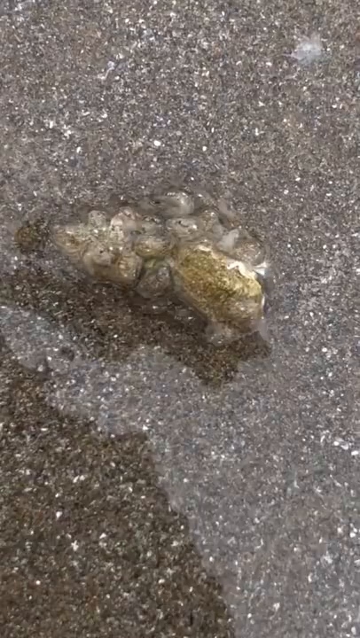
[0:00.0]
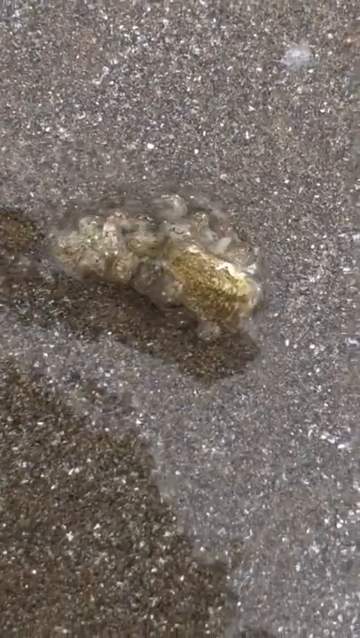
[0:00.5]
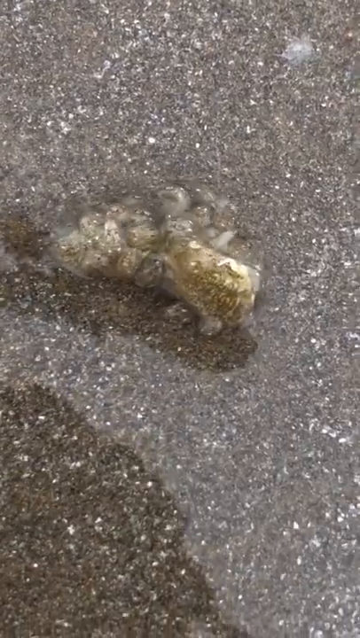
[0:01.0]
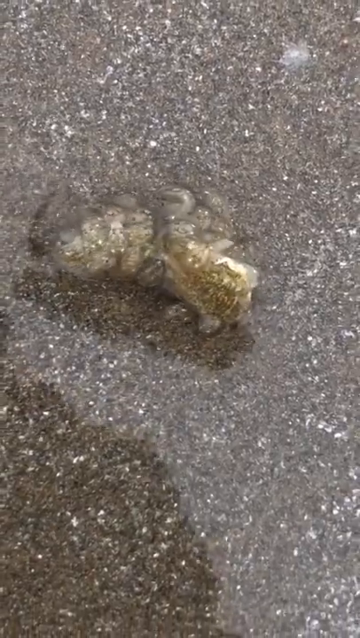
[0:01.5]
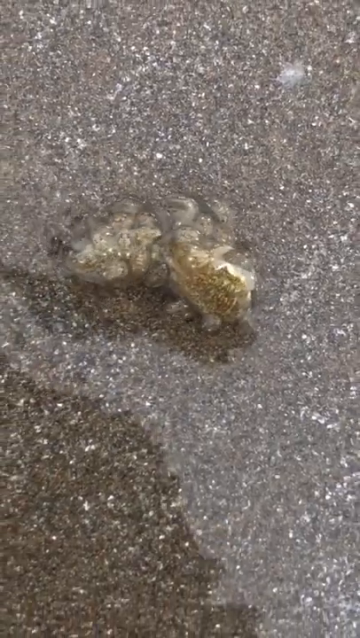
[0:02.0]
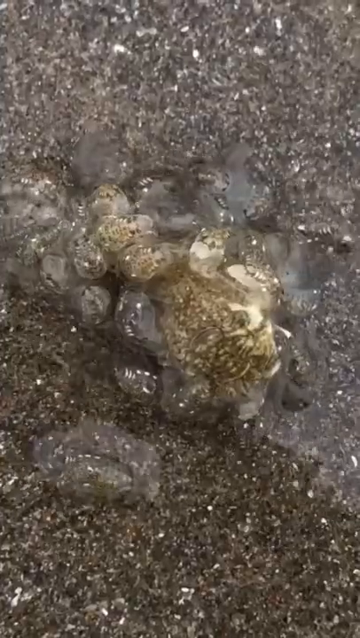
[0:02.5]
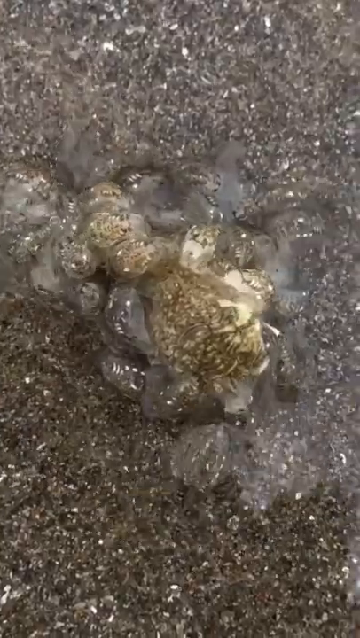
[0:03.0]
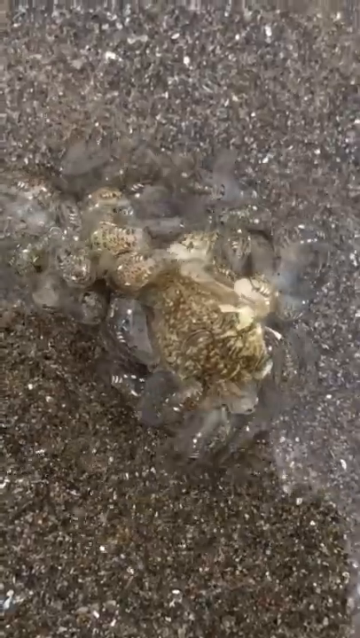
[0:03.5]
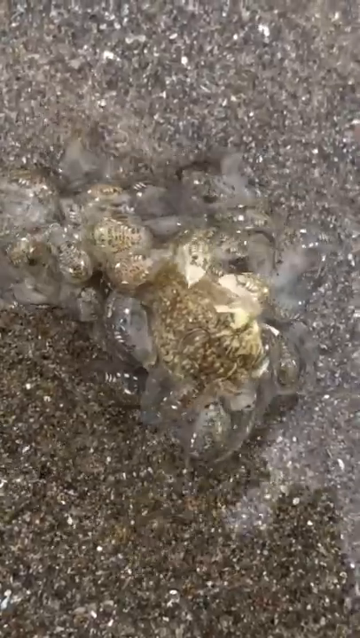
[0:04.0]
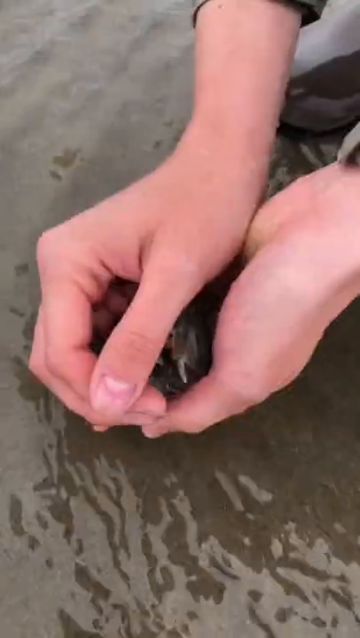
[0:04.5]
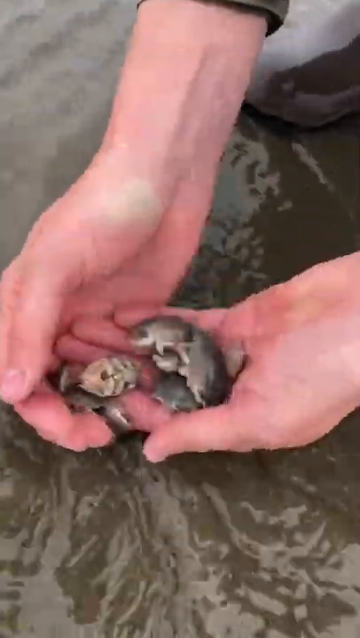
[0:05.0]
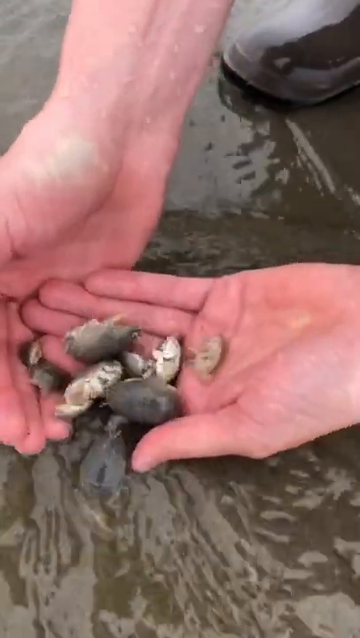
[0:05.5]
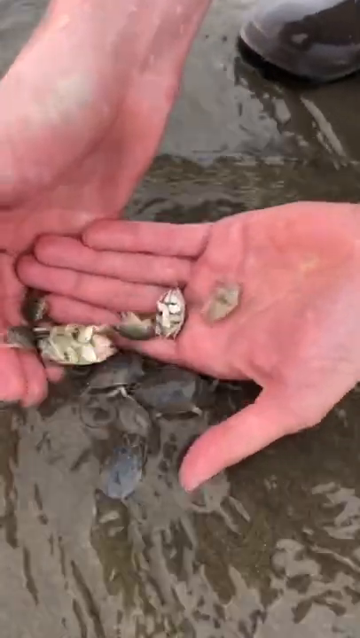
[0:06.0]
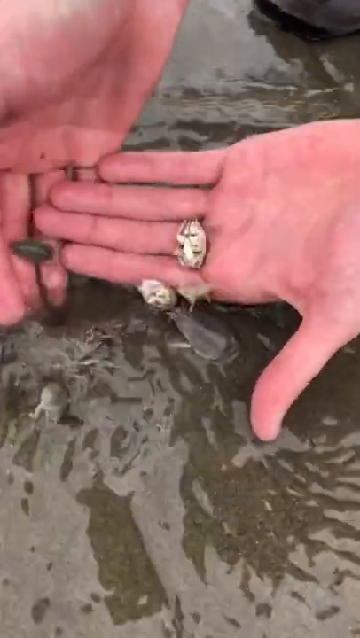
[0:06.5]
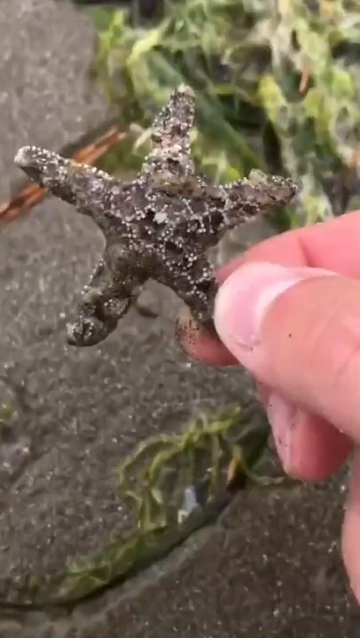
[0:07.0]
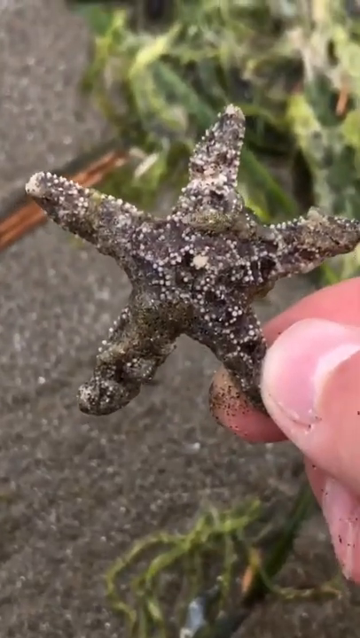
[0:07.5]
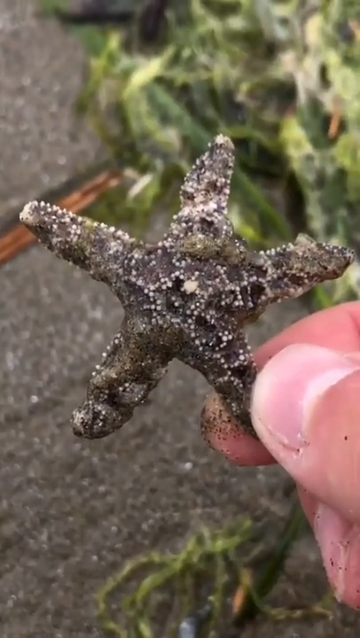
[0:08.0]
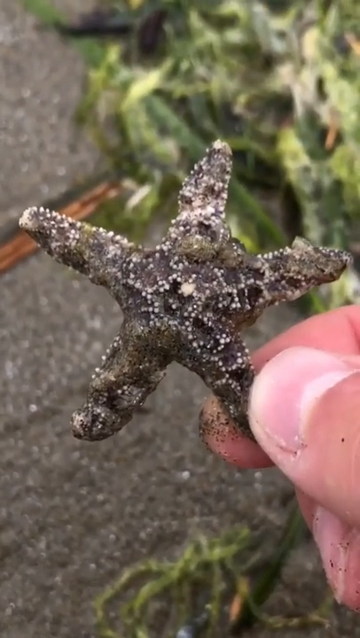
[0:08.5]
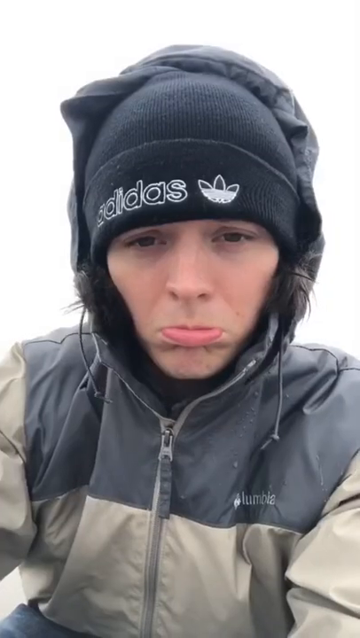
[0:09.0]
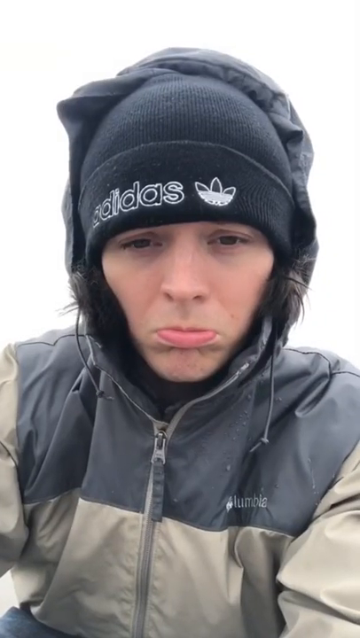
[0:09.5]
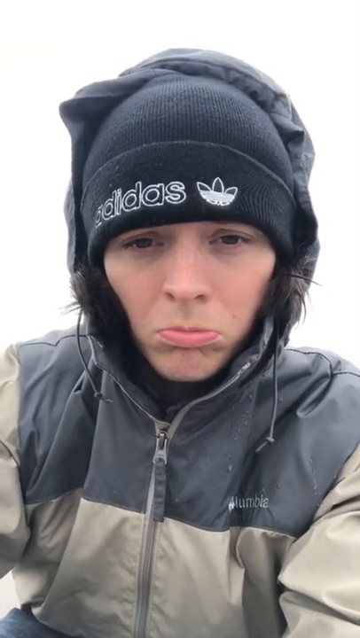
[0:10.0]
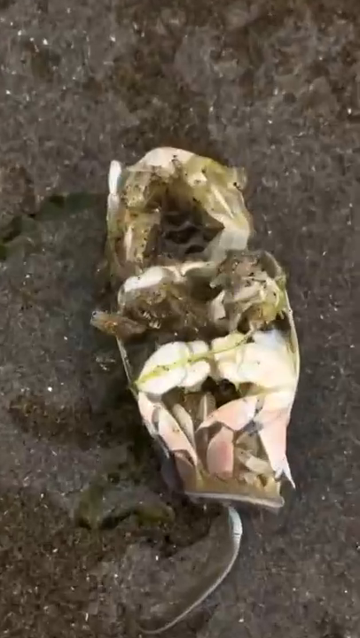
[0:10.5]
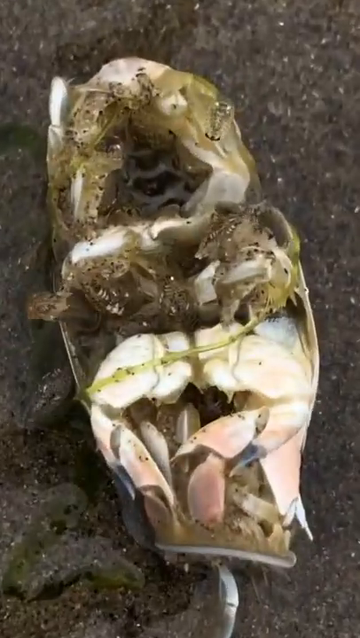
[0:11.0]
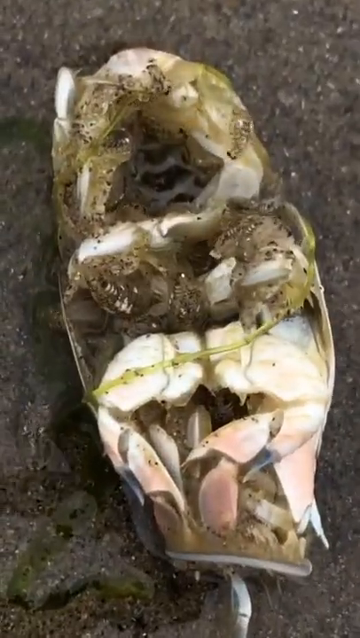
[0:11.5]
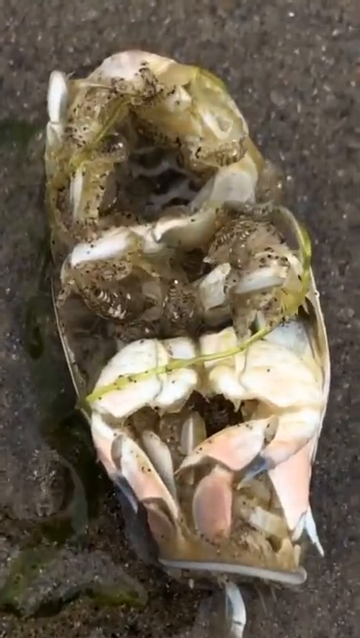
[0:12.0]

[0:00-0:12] On sand, what appear to be piranhas are buried in the sand with little baby piranhas around it. What appears to be a woman holds a handful of these little creatures, apparently piranhas, and lets them go. A starfish appears, and the woman then holds a starfish; she appears to have a sad face. The piranhas are possibly eating the starfish. She wears a black Adidas ski cap and a jacket that is kind of black and greenish. She looks down at the piranhas, apparently eating the starfish, with a sad face. The bottom of some creature is visible, possibly a starfish, with many little piranhas eating from it. There is water. The woman puts the creatures back into the water; it is unclear whether they are piranhas, as they almost look like bugs, and she throws them into the water. Many little bitty piranha-like creatures are around them. She has just one starfish, which is gray. The video keeps cutting back to the piranhas eating in the sand and a little bit of water, eating the creature or bug, then to her holding a starfish and throwing the bug-like creatures into the water, with a sad, pouty face.